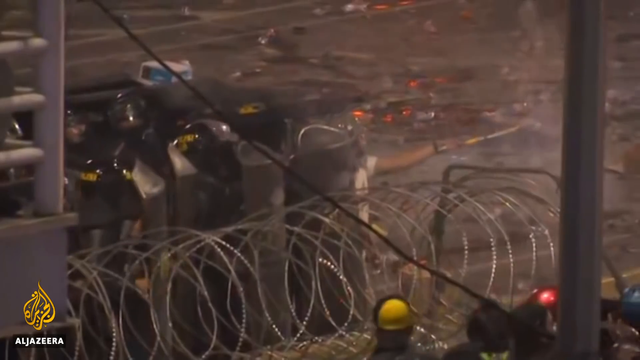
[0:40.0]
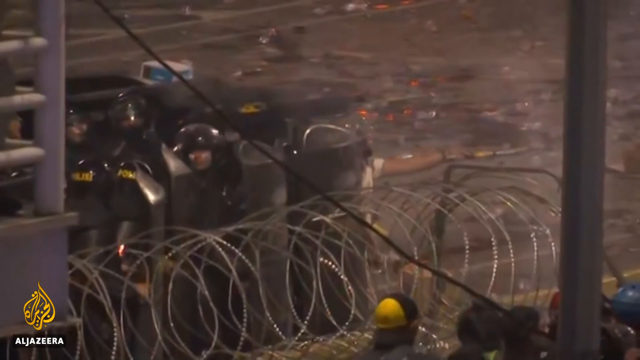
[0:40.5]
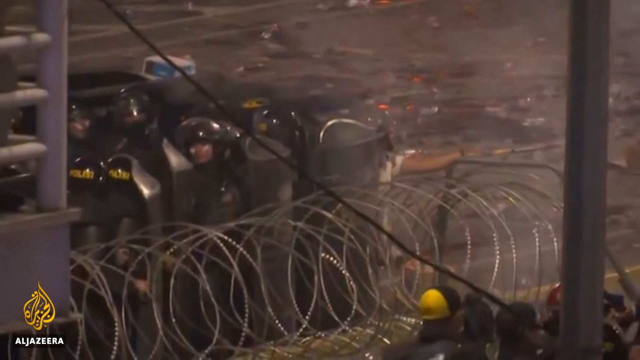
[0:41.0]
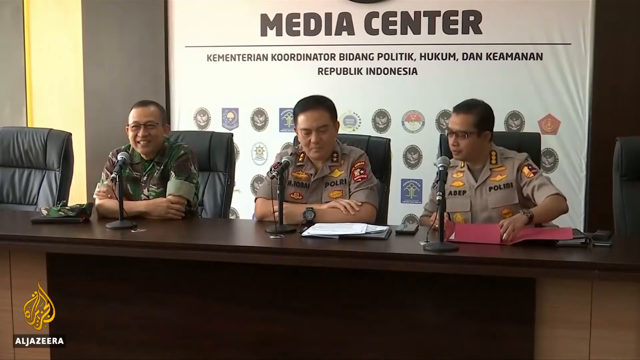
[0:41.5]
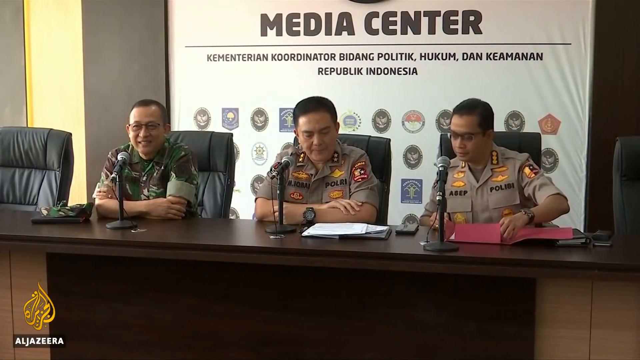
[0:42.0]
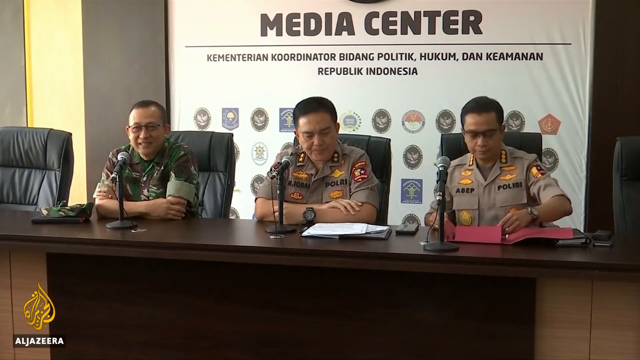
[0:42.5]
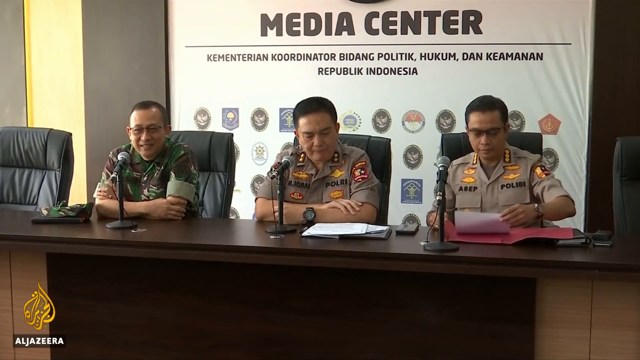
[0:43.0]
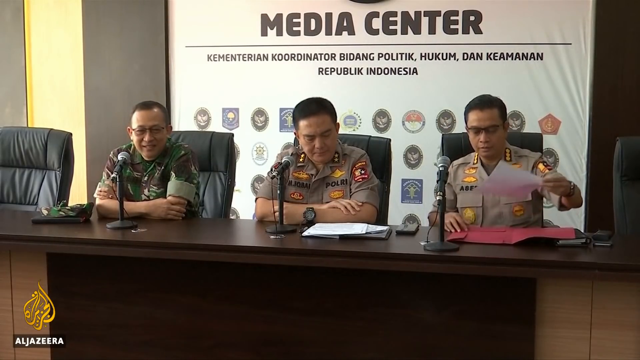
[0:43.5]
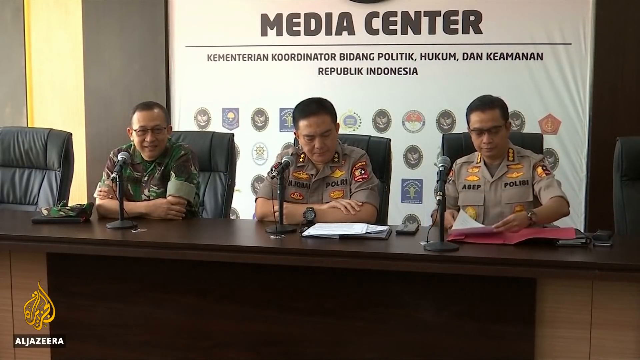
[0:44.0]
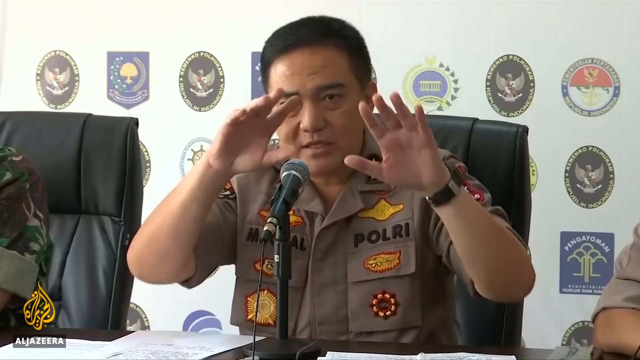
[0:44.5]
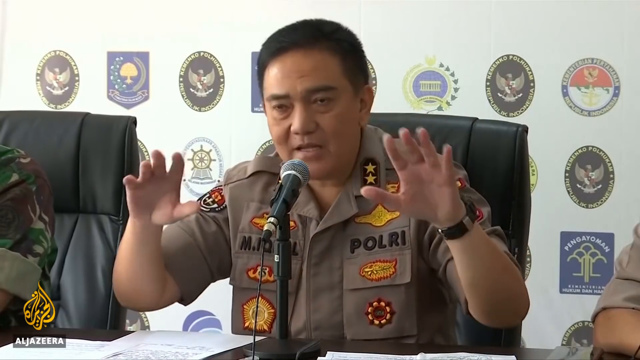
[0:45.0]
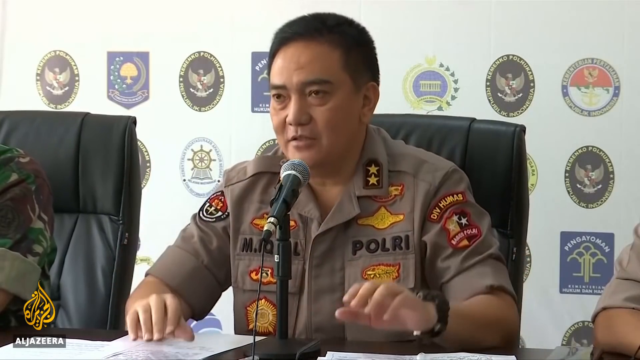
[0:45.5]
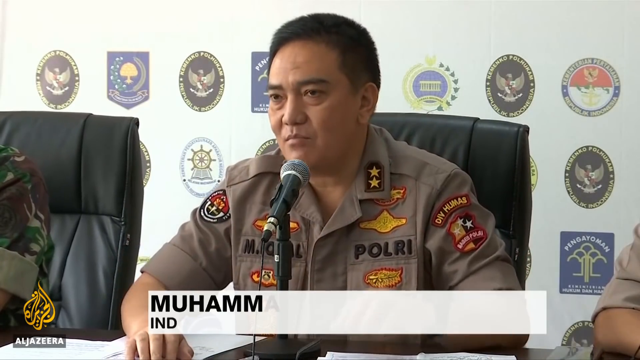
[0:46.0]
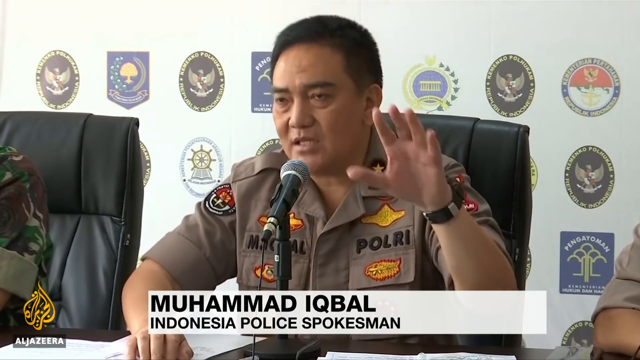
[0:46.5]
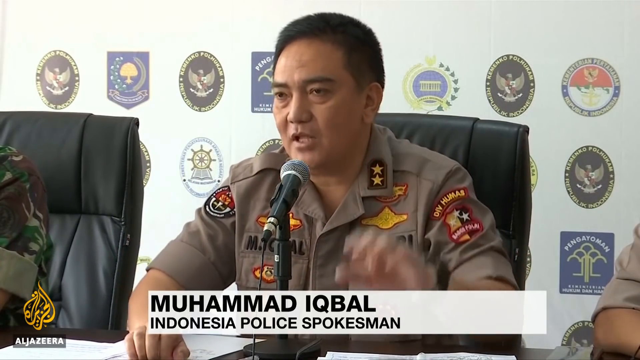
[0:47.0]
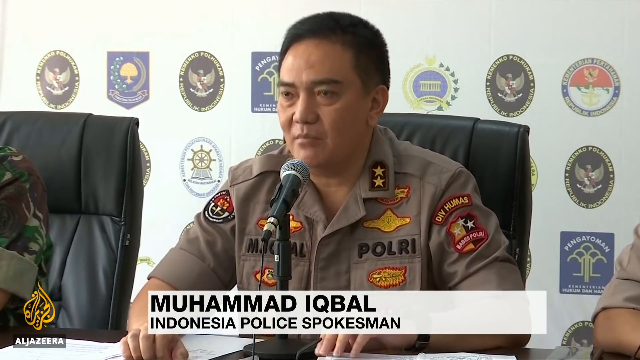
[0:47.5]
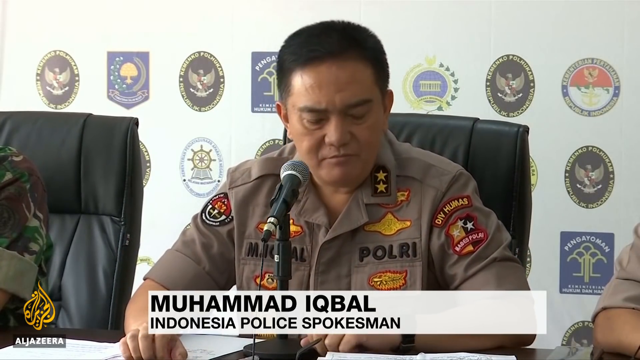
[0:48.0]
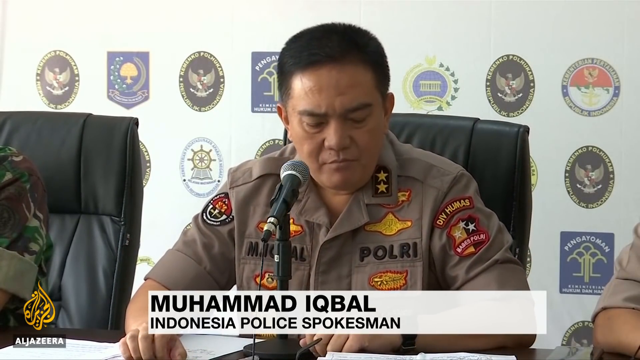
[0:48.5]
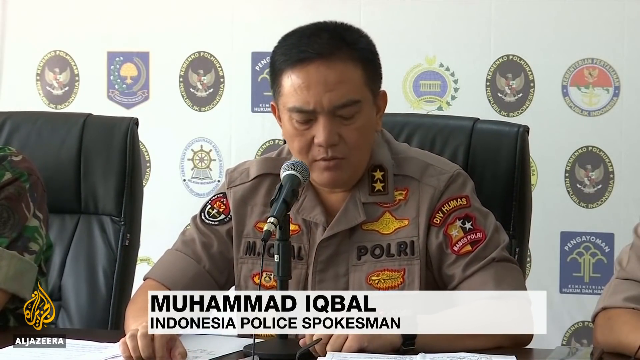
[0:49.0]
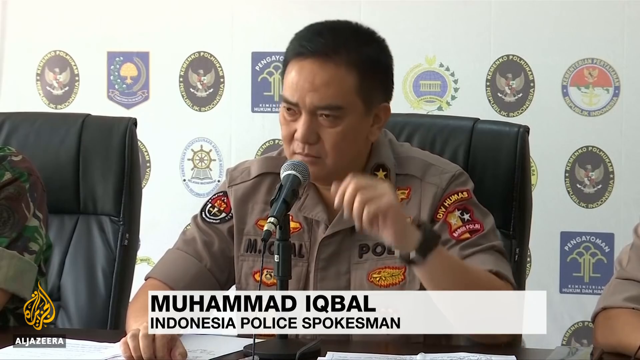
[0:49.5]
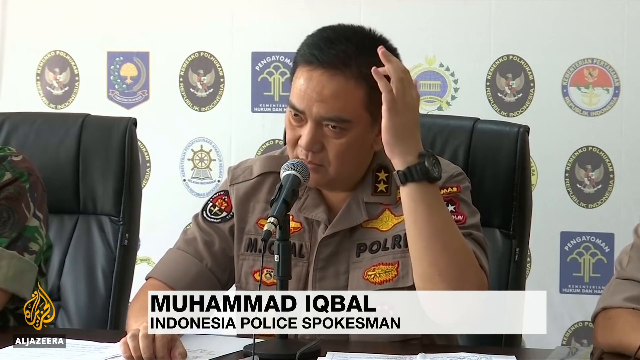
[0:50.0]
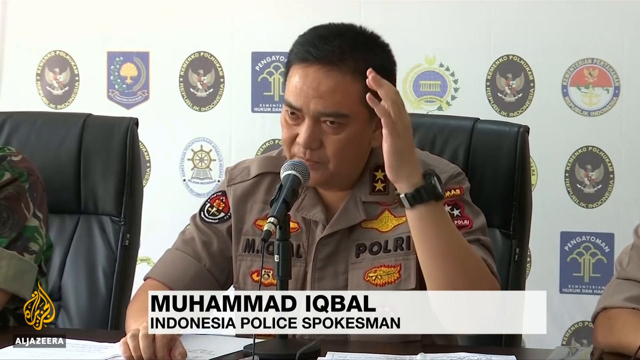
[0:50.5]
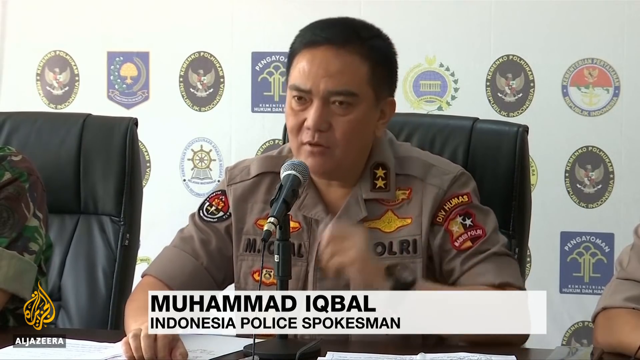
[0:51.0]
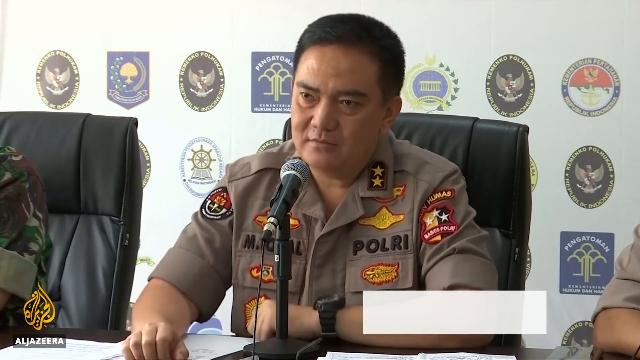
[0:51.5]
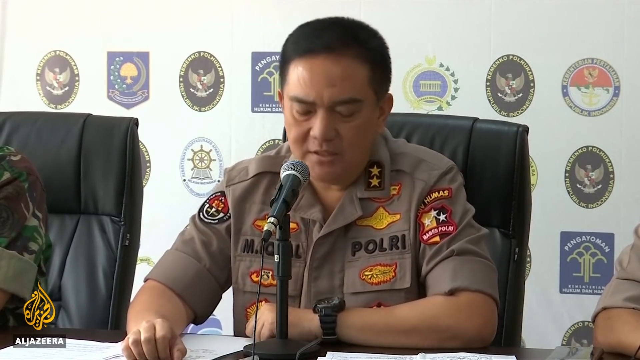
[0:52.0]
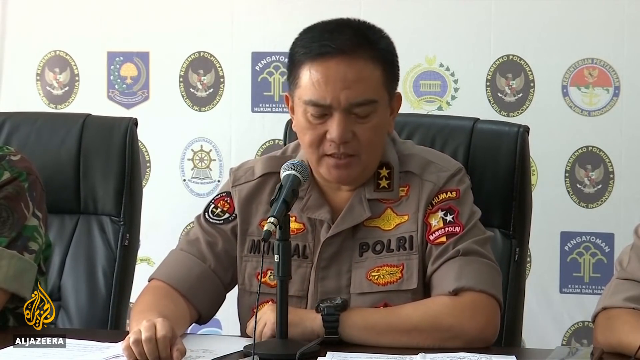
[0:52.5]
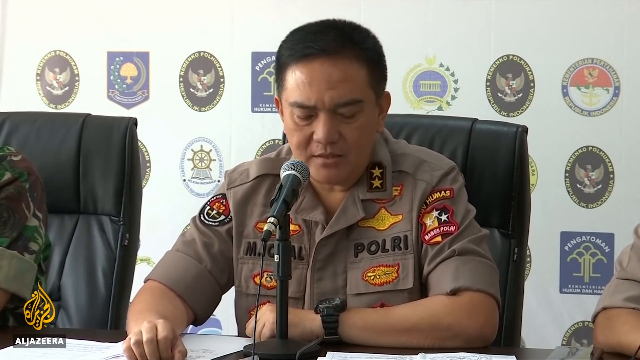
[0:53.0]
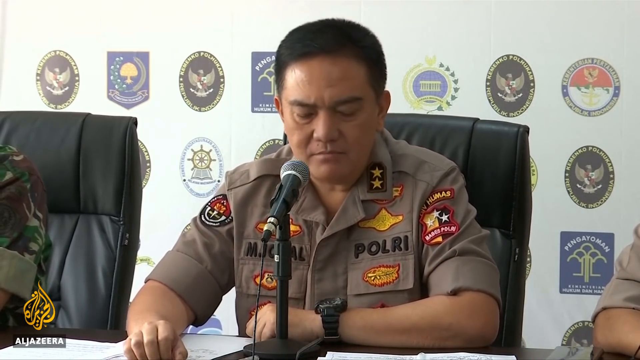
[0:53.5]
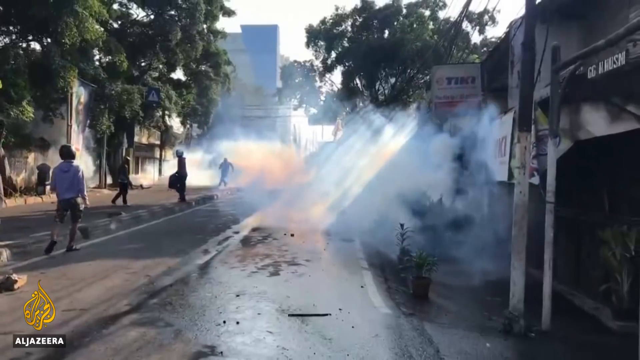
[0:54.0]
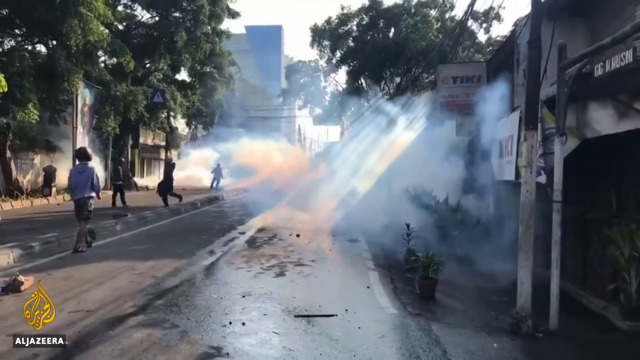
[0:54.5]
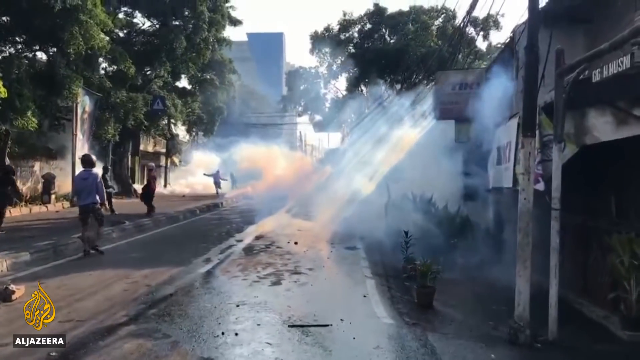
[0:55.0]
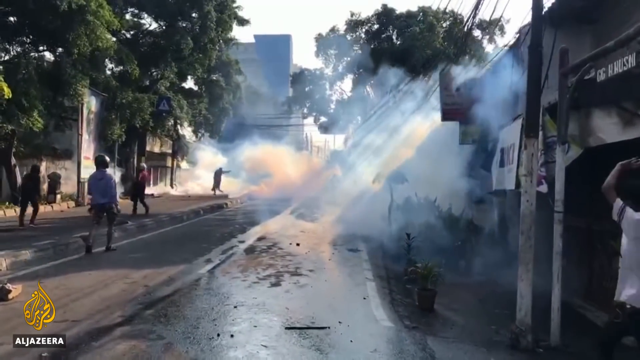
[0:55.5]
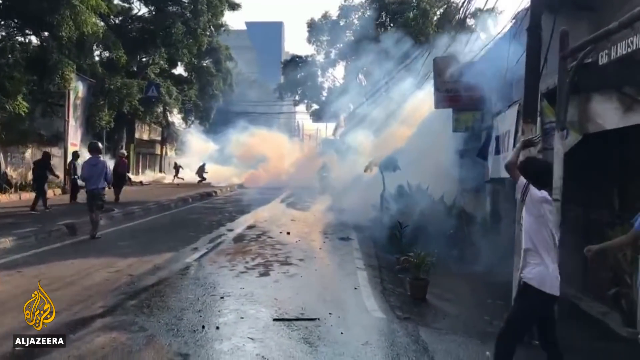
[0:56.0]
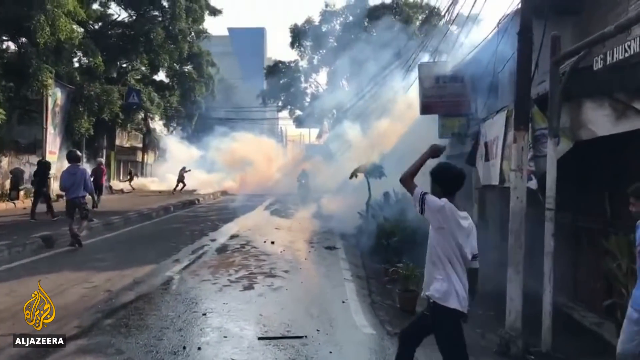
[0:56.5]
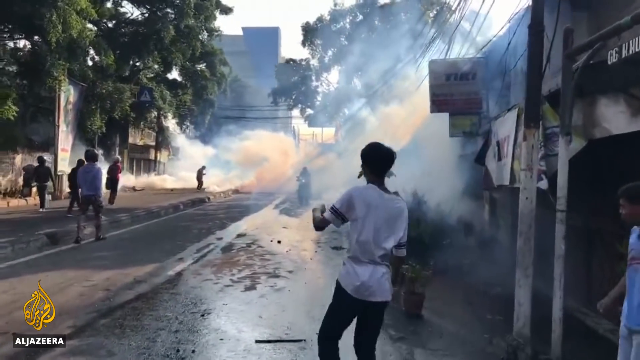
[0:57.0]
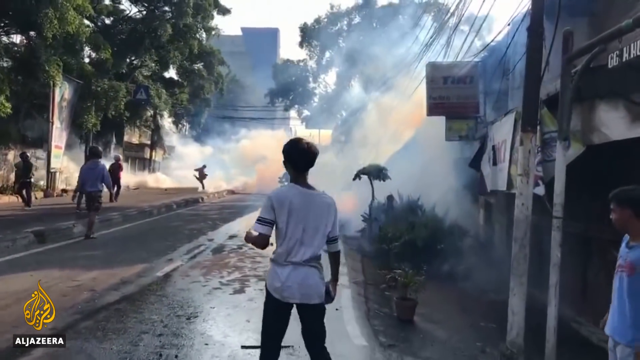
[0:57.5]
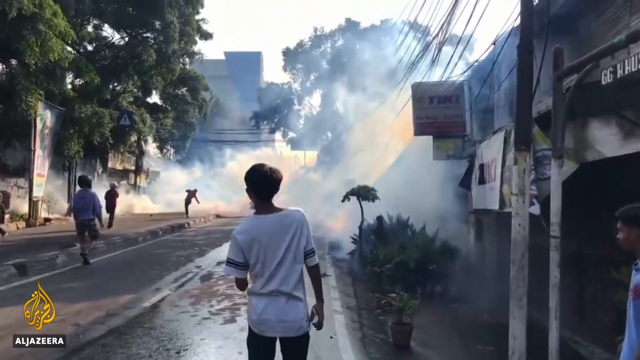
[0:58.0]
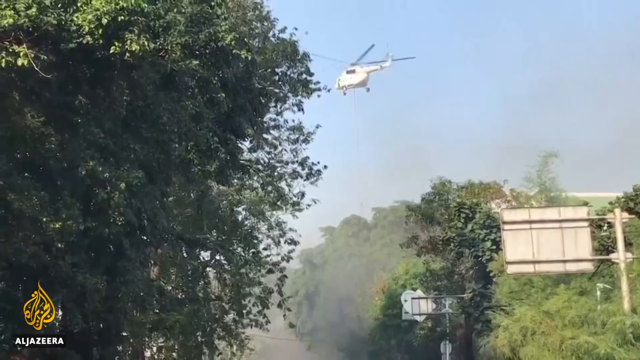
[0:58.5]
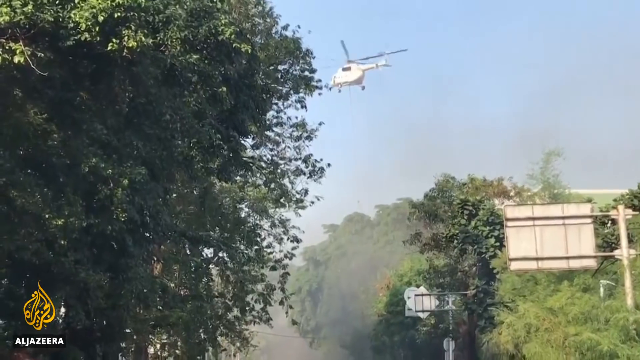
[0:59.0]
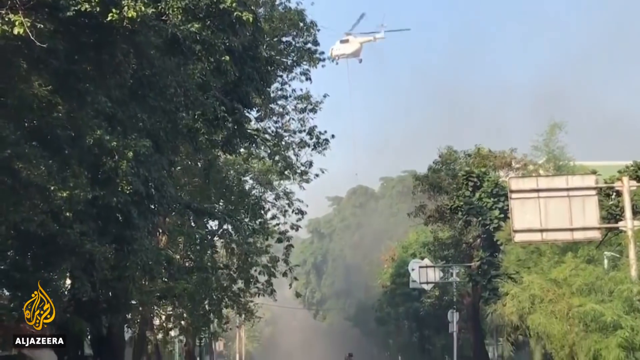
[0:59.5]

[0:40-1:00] A riot breaks out at night, with many police and many people rioting against them. The scene then moves to a media center with the text "Mohammed Abul Indonesia police spokesperson," broadcast on Algeria TV, as shown in the lower left-hand corner. This police spokesperson wears many badges. Clips of the riot are shown: many young people in the streets throw things without any protection, smoke is everywhere, a helicopter flies overhead, and the police have set up wire bars, probably as a barrier against the rioters. Three policemen sit with the policeman who was speaking at a large table.